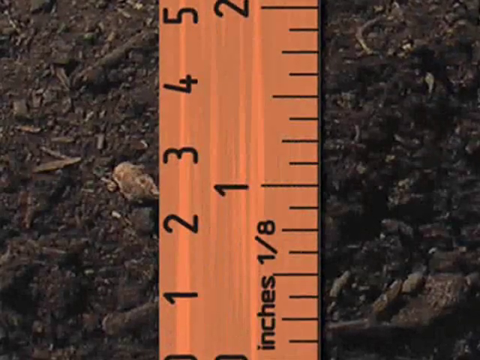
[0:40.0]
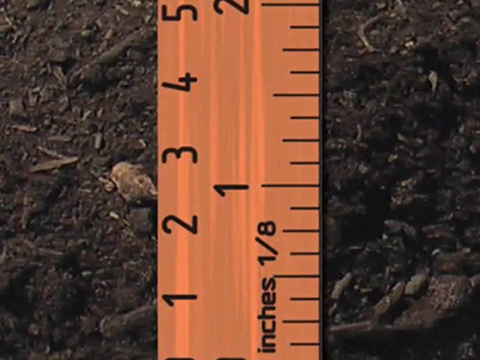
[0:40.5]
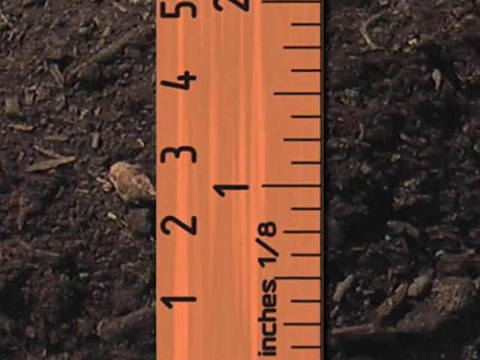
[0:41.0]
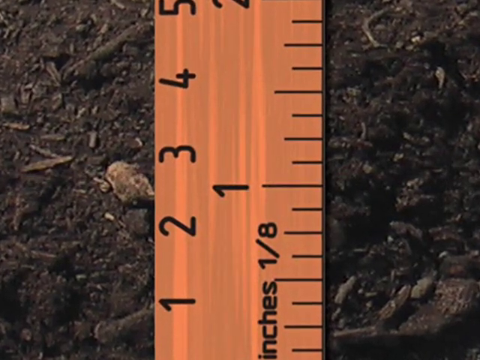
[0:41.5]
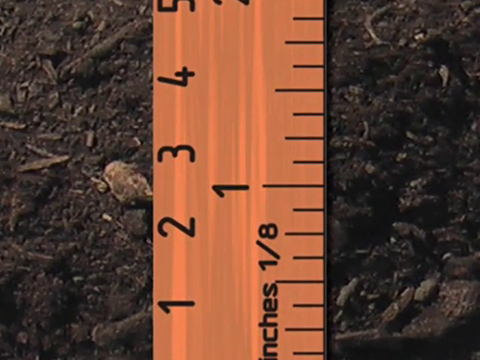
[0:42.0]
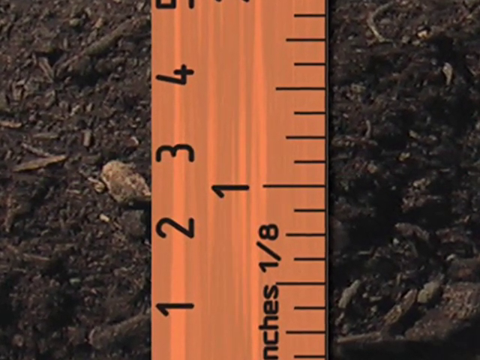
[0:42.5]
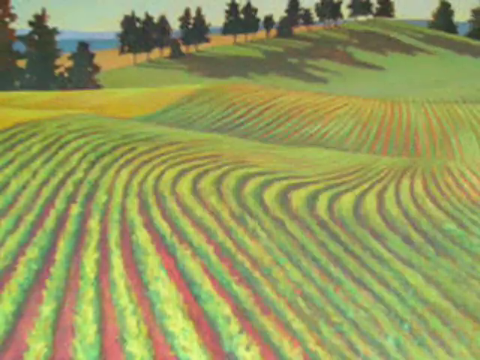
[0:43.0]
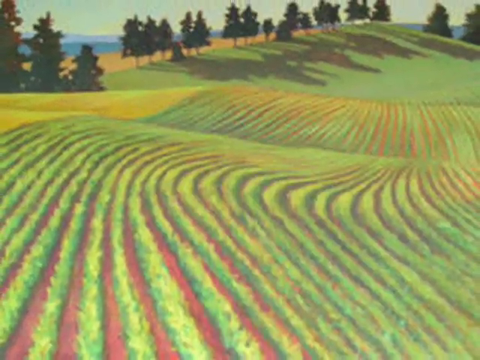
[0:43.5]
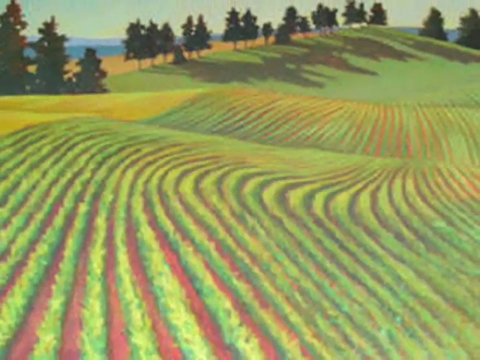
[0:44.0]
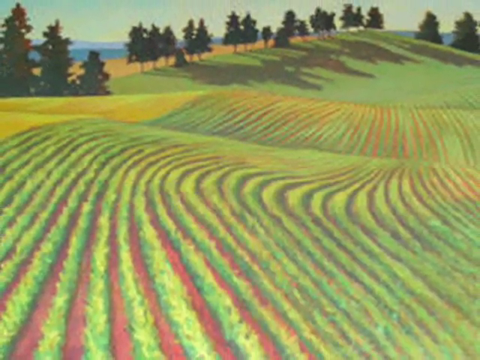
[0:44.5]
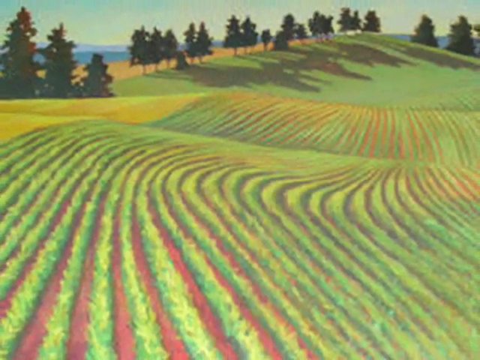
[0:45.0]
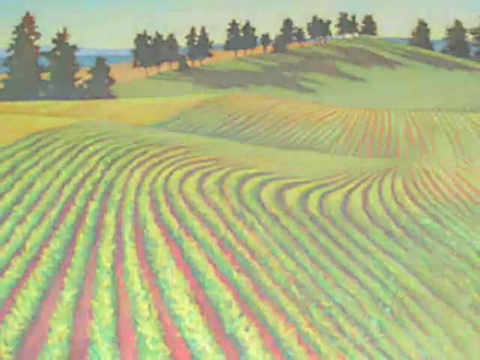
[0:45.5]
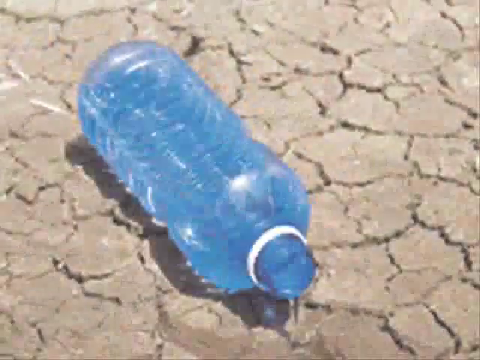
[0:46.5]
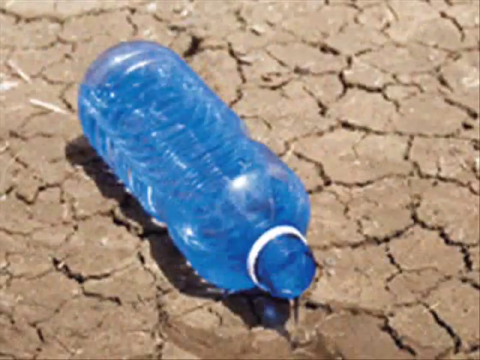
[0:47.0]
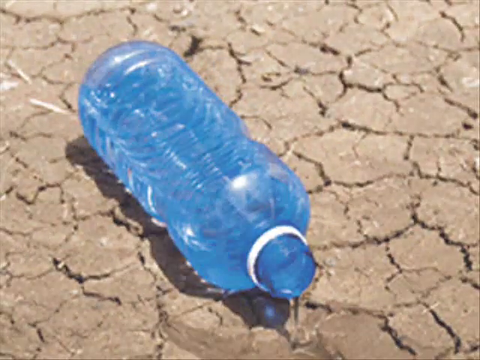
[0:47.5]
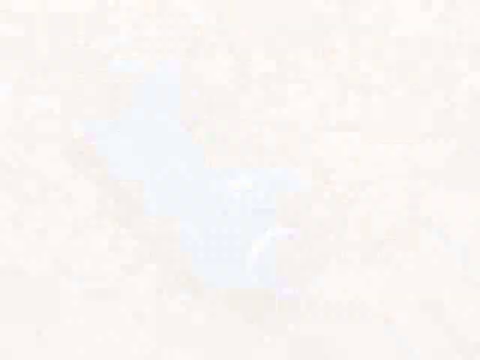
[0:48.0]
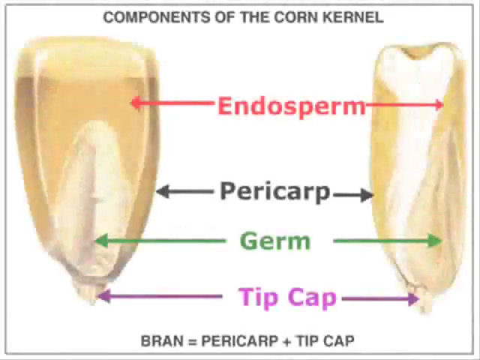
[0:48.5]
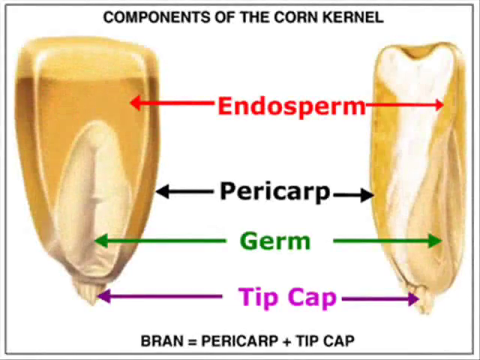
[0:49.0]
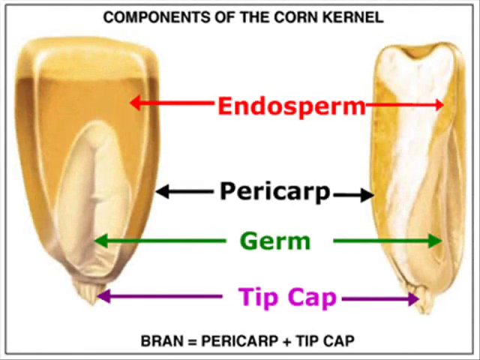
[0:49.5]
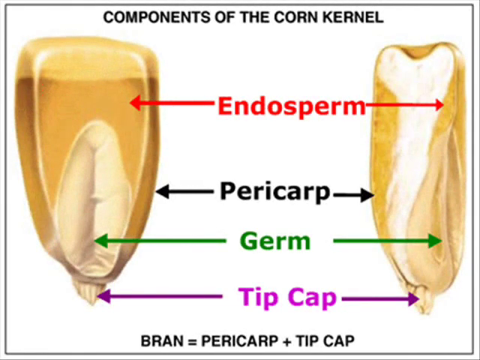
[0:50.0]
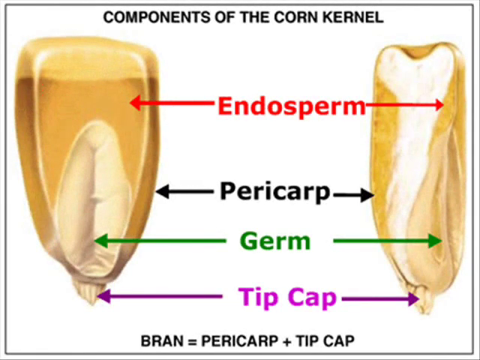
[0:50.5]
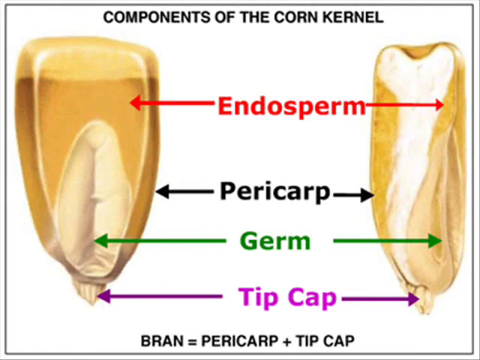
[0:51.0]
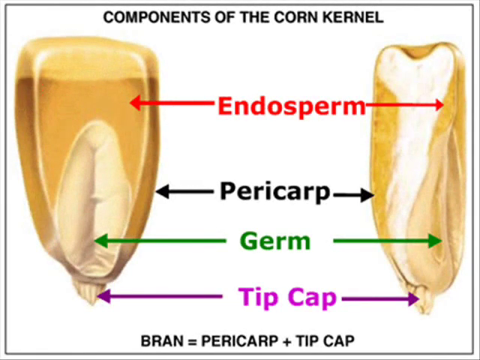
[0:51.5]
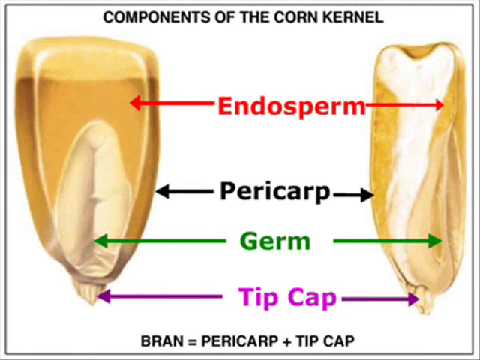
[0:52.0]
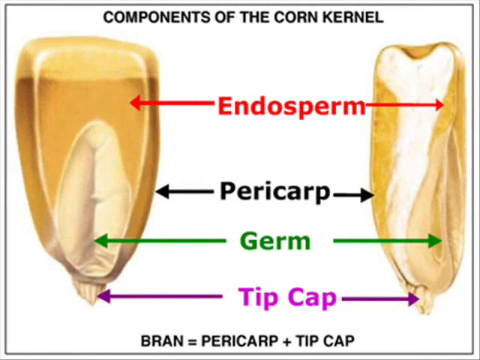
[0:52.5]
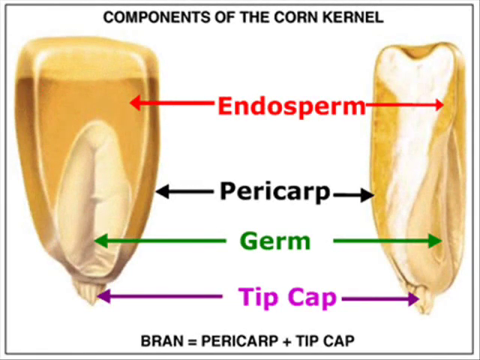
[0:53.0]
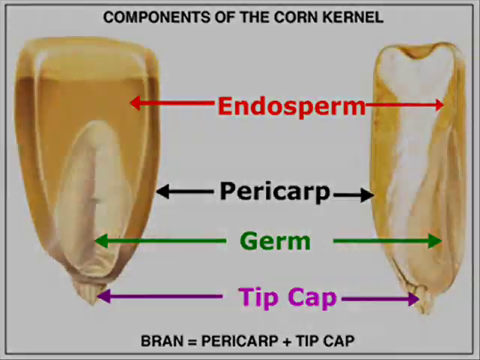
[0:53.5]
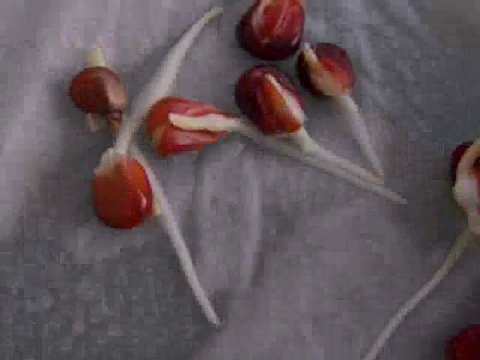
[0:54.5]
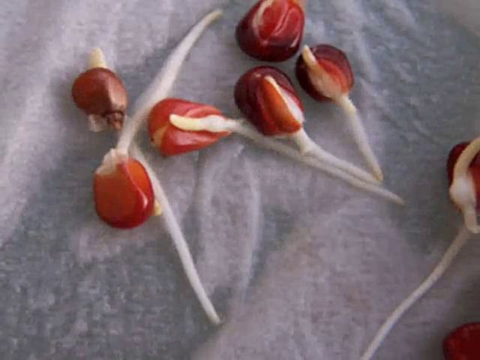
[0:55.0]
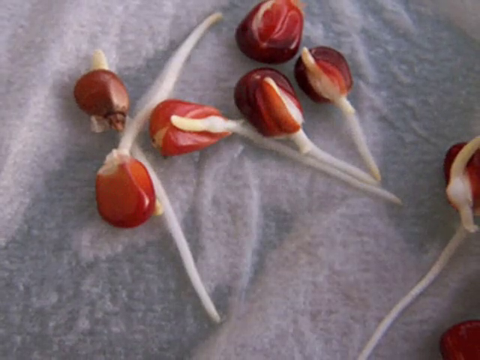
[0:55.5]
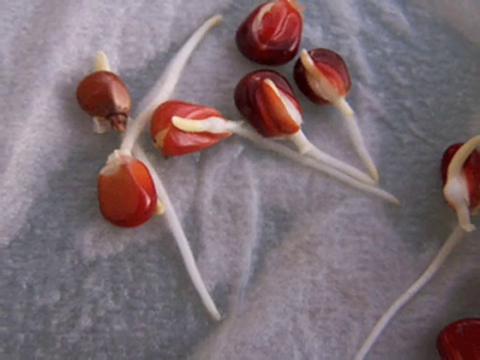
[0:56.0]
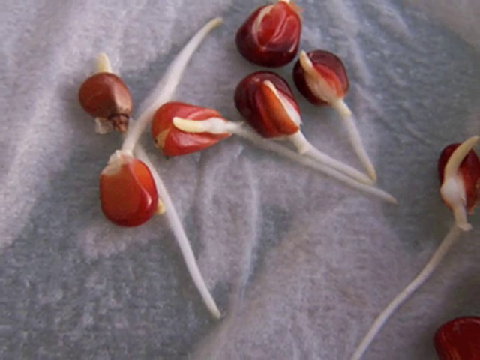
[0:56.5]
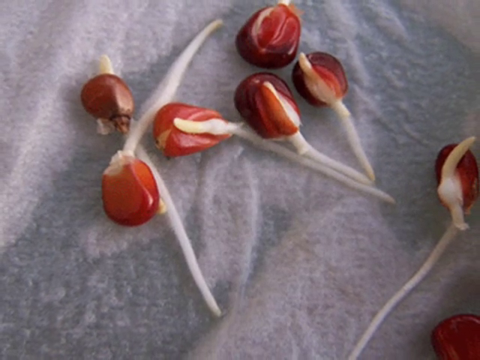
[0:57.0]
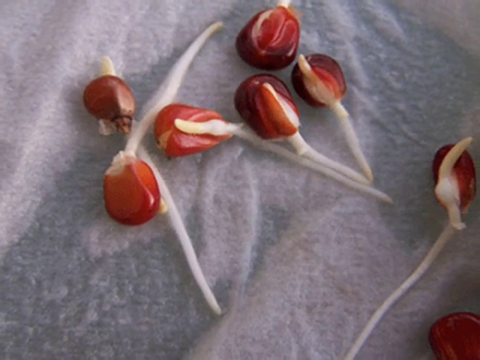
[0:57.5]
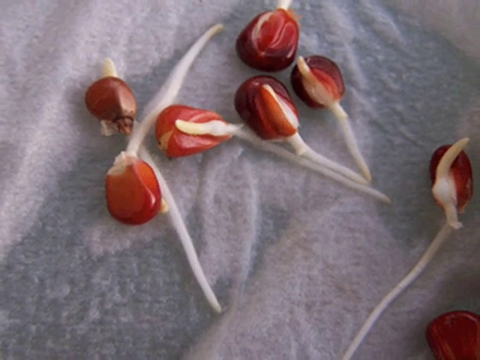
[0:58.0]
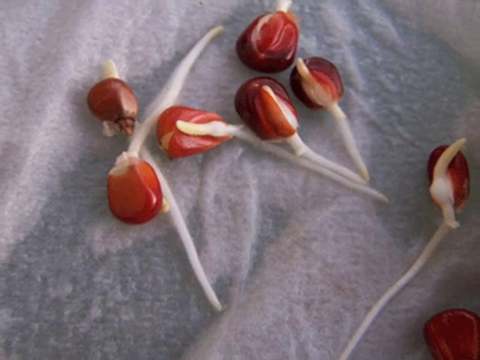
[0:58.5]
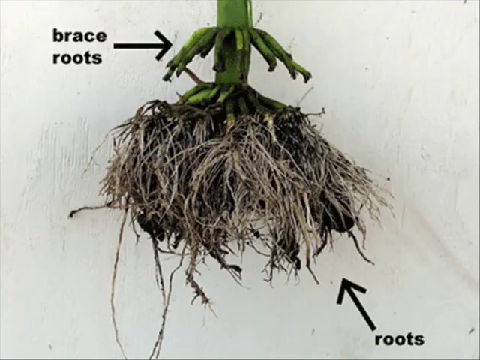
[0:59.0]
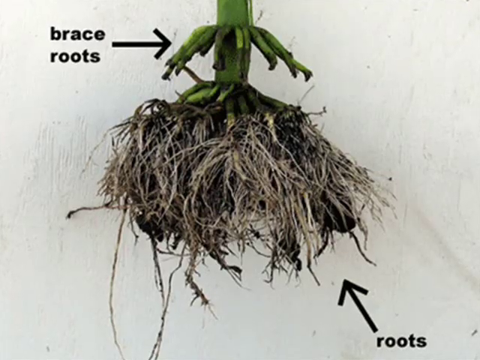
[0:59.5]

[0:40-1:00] A zoomed-in view shows a one-inch mark and a mark indicating an eighth of an inch; it looks like something is being measured on the dirt, and the view kind of zooms in on the soil. The next image is a more animated picture of a farm field where the crop, possibly corn, is not very tall at all, with pine trees in the background and a little bit of sky in a zoomed-out view. Then a blue-tinted water bottle, possibly with some water in it, is on very dry, cracked dirt. A diagram follows showing two kernels of corn with labelled components in the middle: the tip cap, the germ, the pericarp, and the endosperm. The labels are in different colors, purple, green, black, and red, and show where each part is on the kernel. Then the video transitions to the brace roots of the corn.